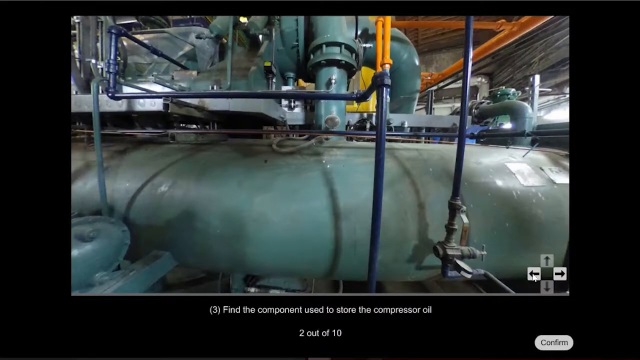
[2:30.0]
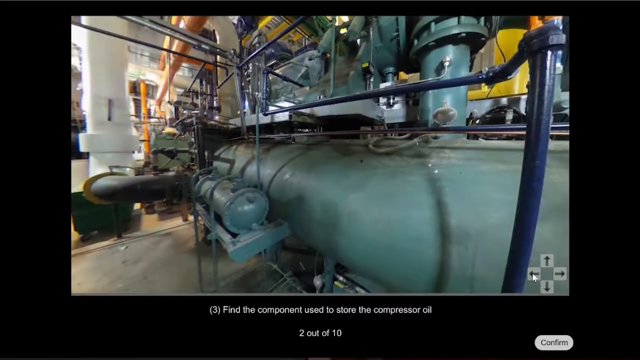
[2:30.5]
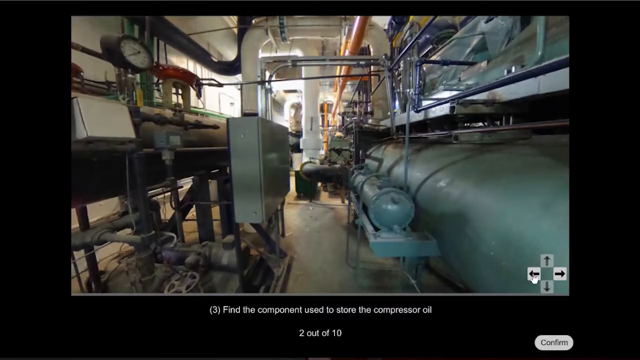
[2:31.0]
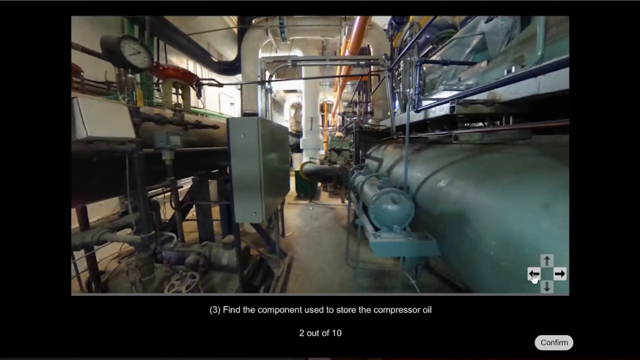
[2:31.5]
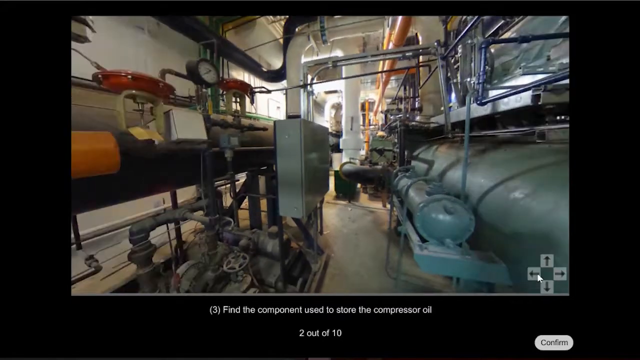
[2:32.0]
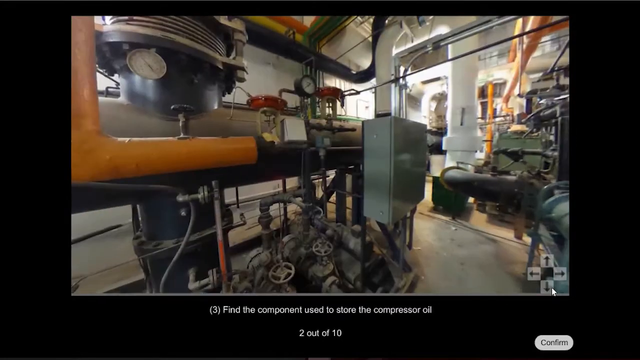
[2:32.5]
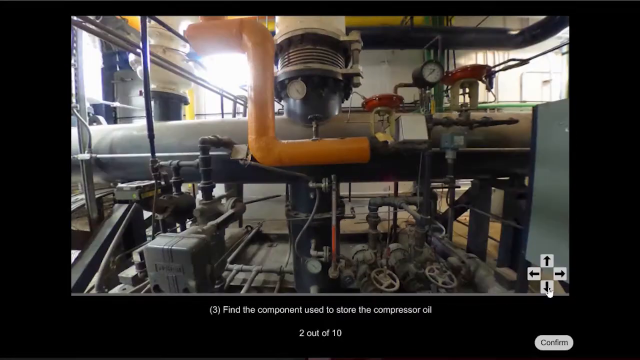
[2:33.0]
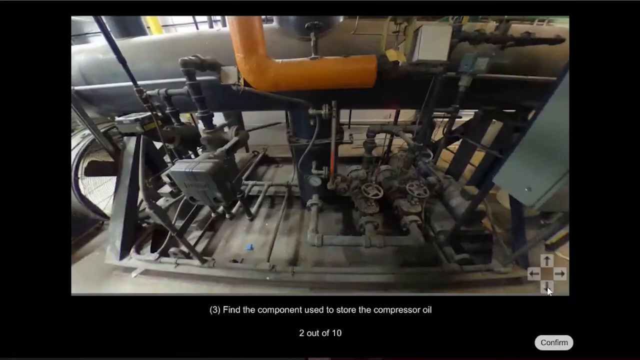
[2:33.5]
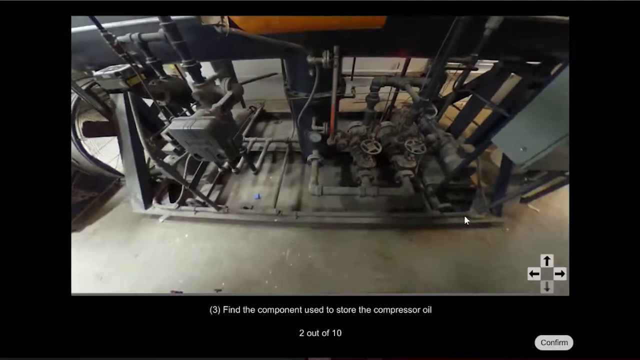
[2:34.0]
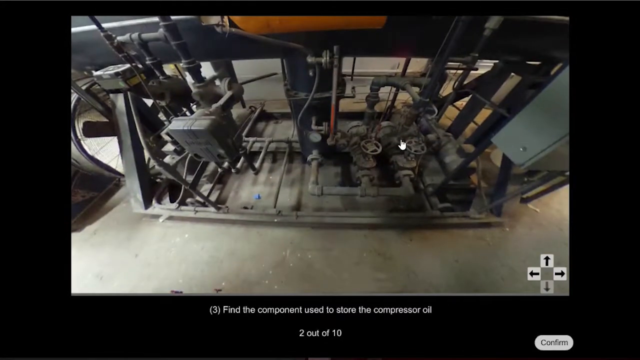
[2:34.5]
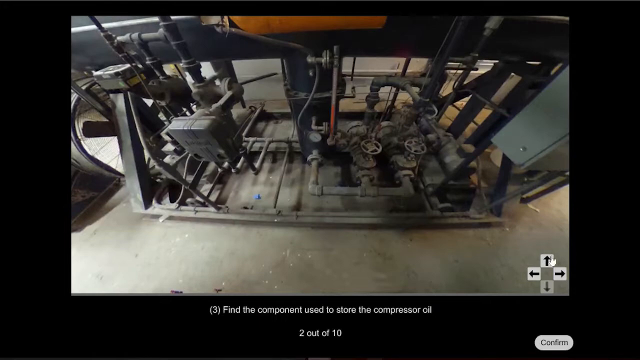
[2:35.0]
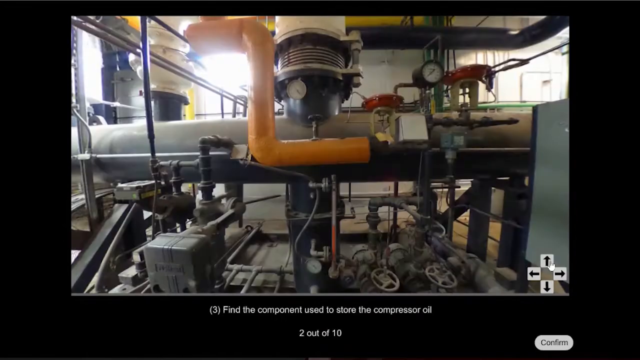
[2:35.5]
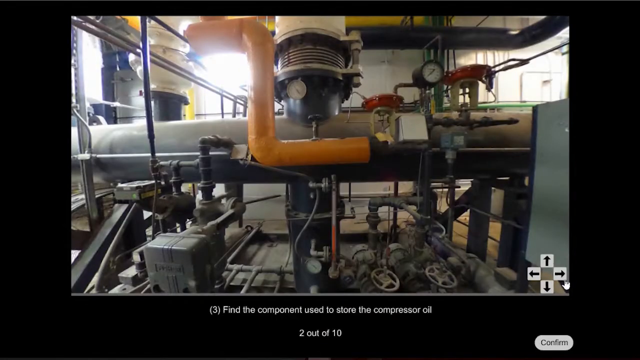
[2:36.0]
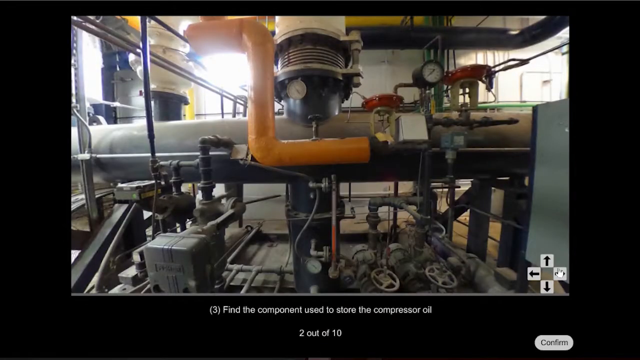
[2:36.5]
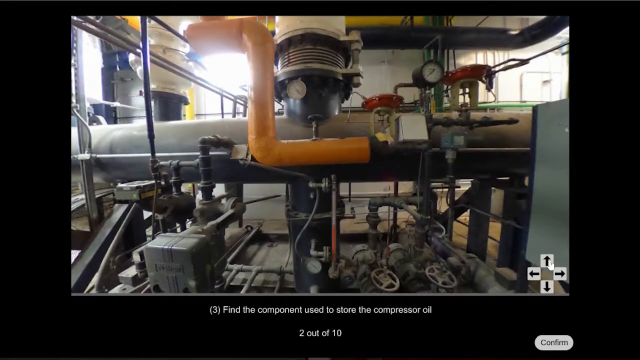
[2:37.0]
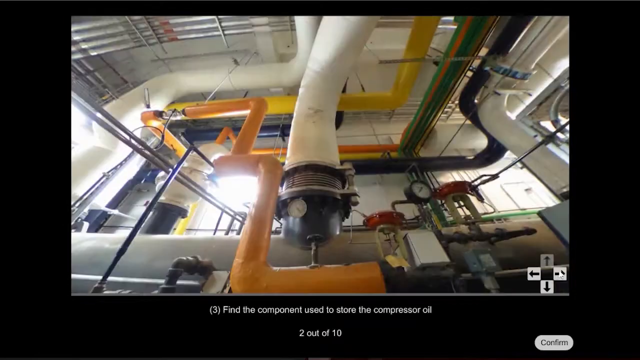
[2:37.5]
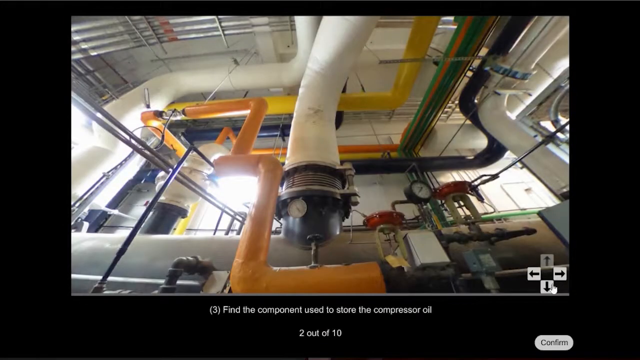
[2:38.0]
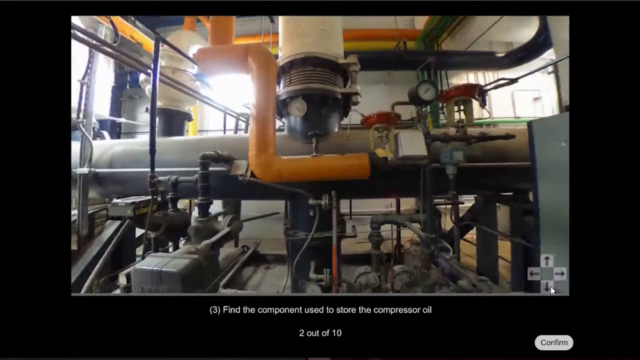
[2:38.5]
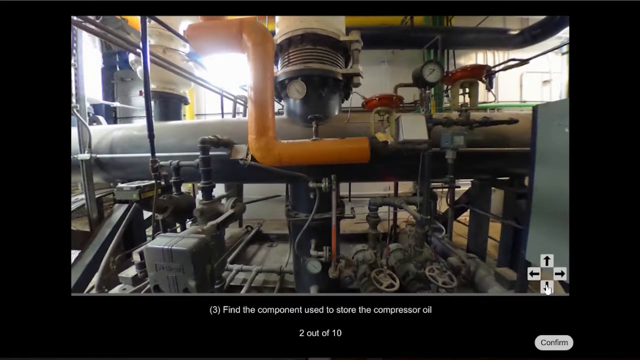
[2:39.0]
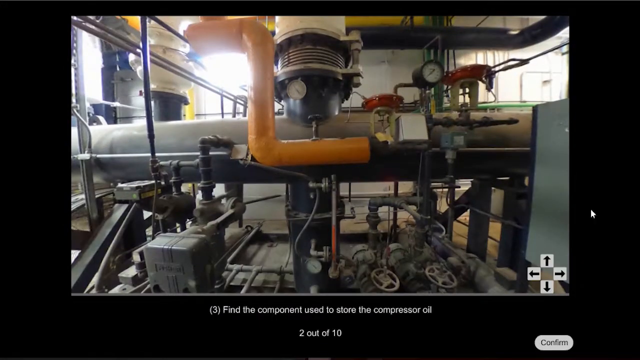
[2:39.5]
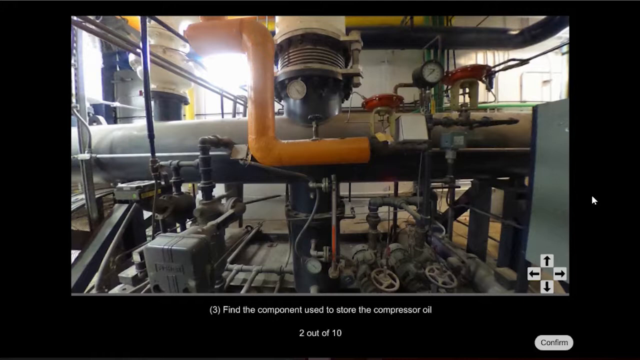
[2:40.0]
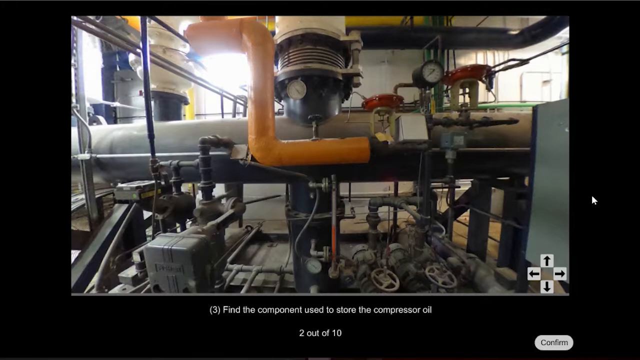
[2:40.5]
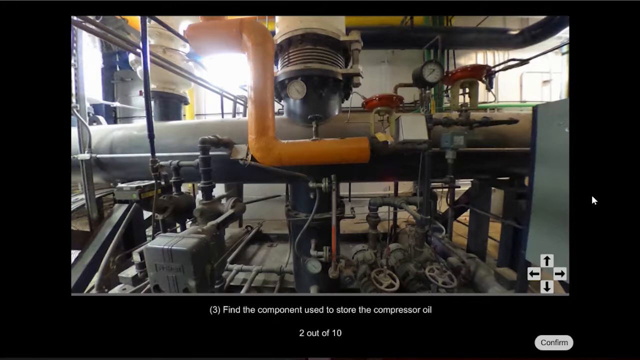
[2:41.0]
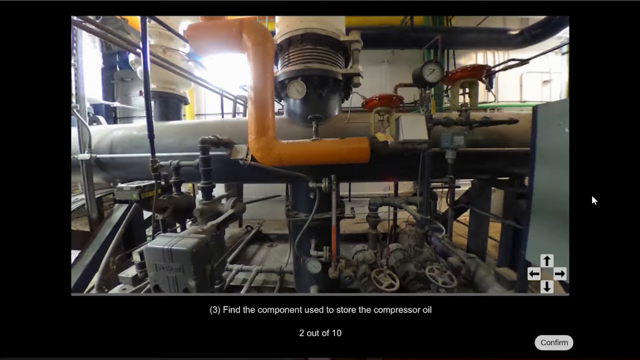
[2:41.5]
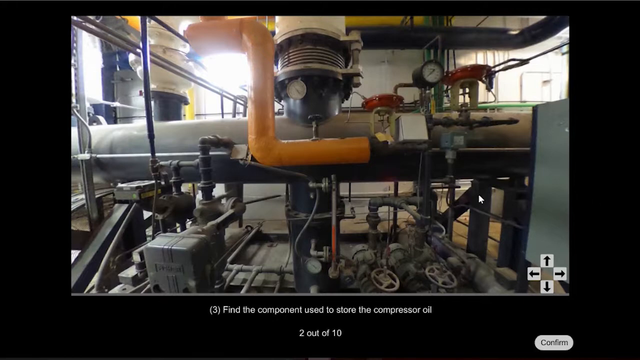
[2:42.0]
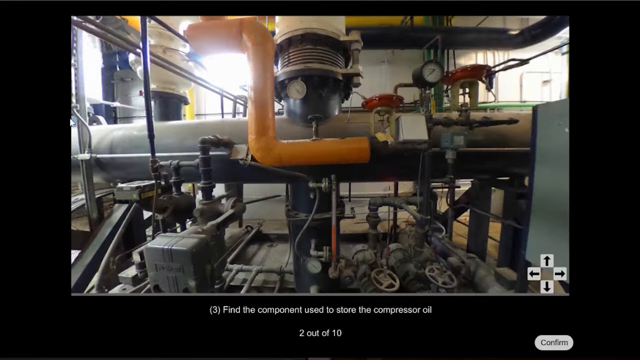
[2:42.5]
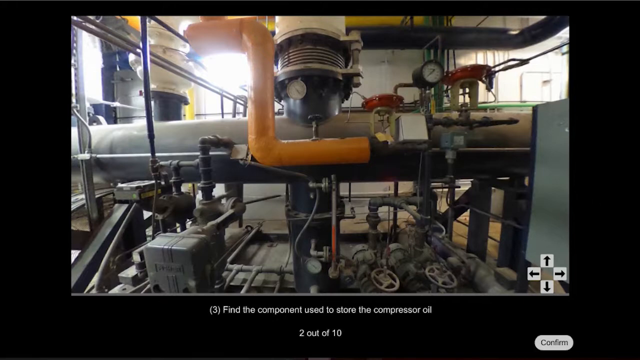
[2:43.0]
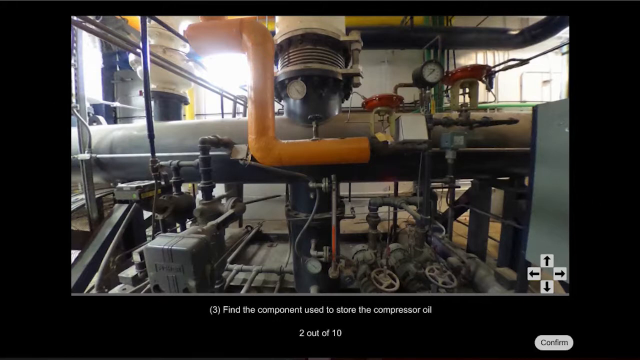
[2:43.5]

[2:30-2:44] The view faces the big green cylindrical unit that is part of the machinery being tested on. It has small and large pipes in orange, white, blue and gray. A long view faces the direction of the entryway. The user keeps turning to the left using the on-screen arrows, until facing the unit with the orange pipe in front of it, the gauges and the valves. He highlights some valves by circling them with the cursor. The view then scrolls back up, goes up farther and returns to center, which appears to be the end of the movement. Blue, orange and yellow pipes are visible.